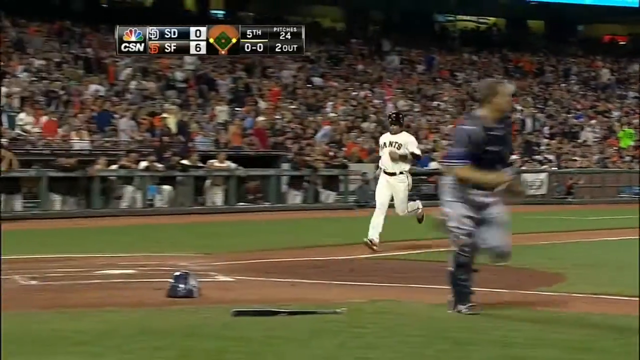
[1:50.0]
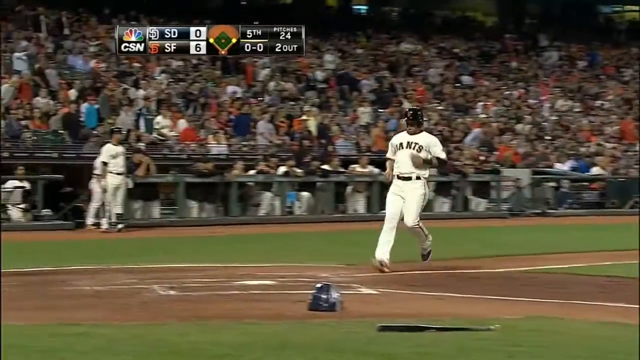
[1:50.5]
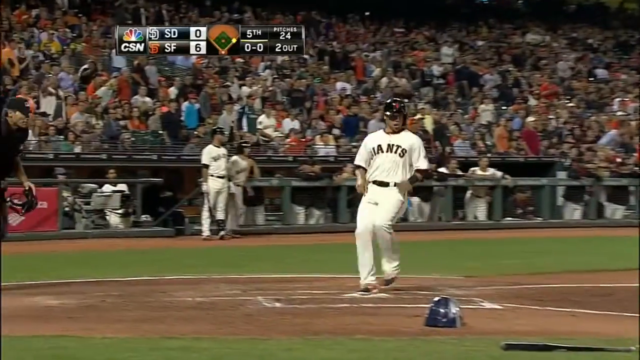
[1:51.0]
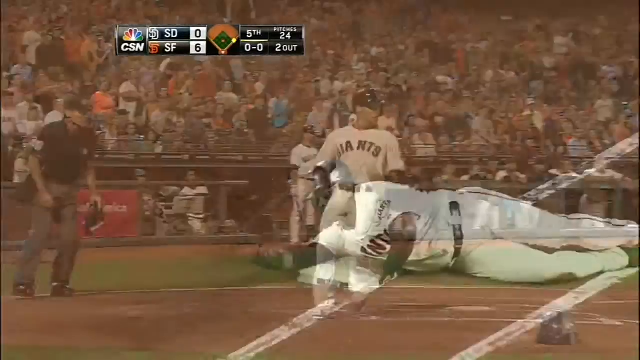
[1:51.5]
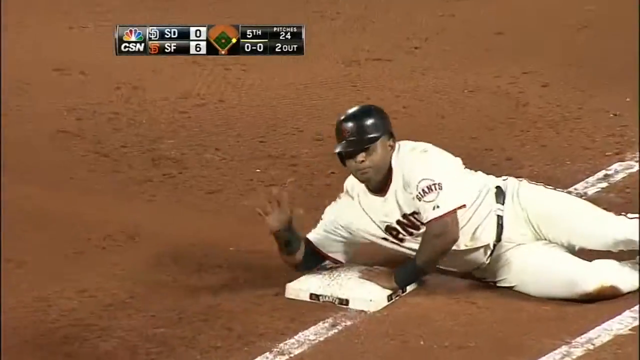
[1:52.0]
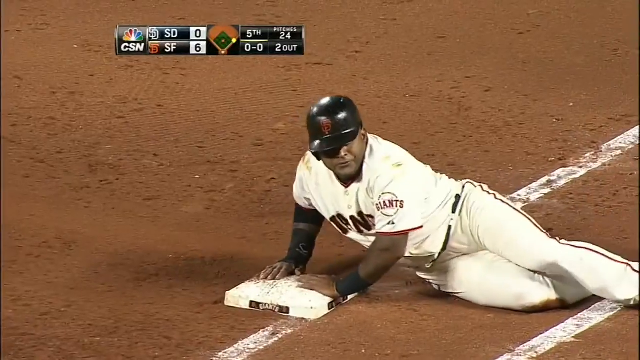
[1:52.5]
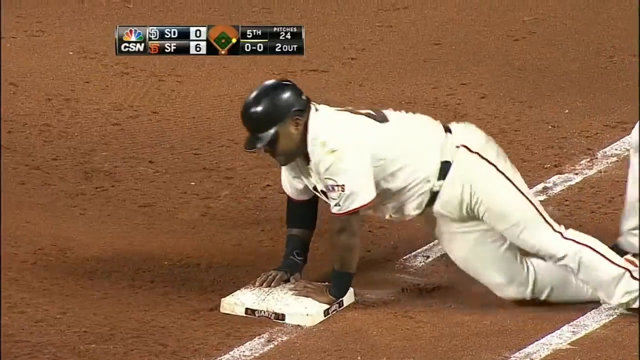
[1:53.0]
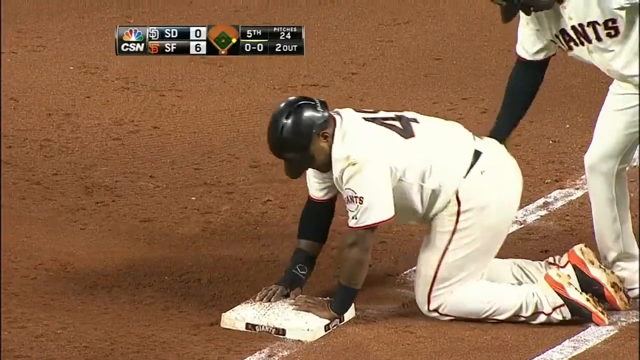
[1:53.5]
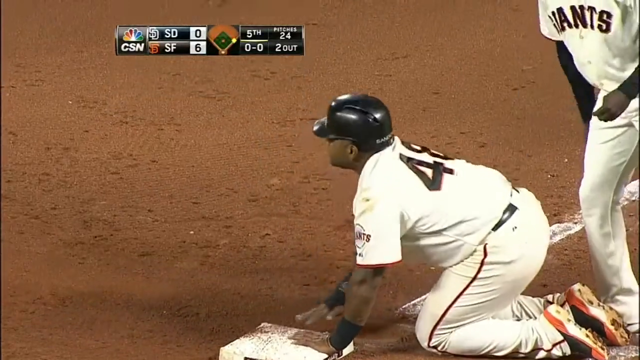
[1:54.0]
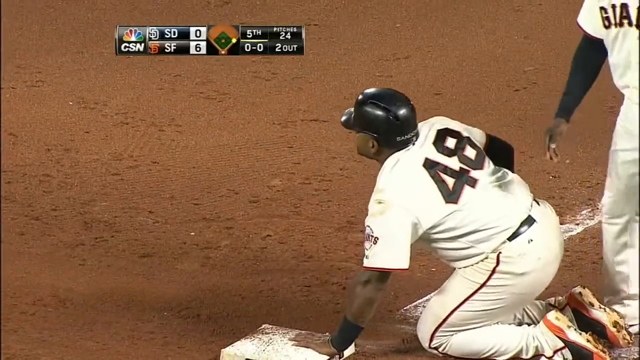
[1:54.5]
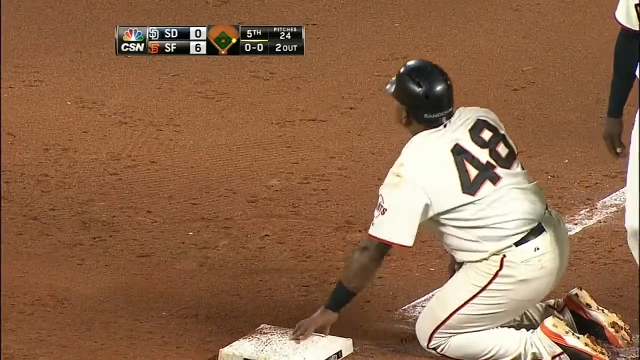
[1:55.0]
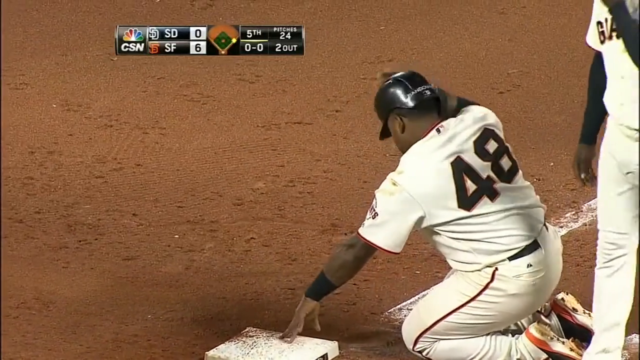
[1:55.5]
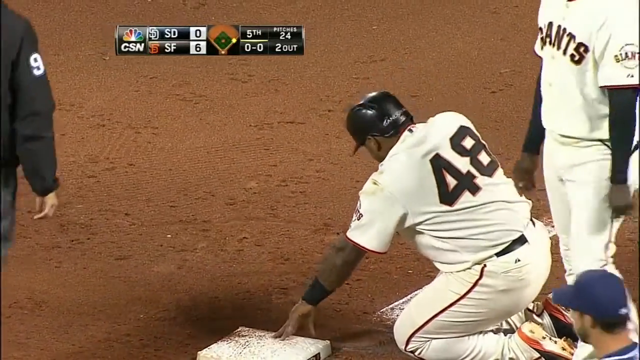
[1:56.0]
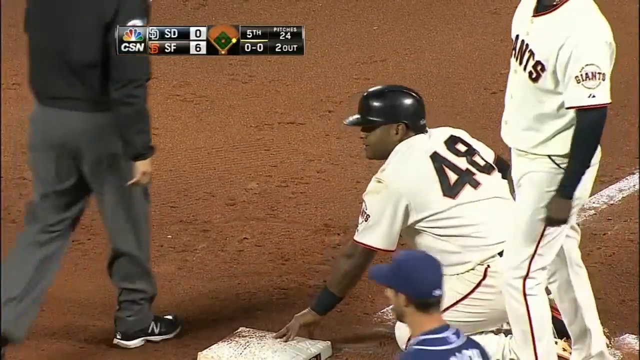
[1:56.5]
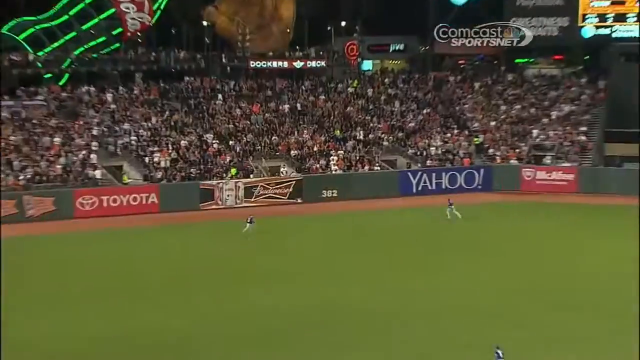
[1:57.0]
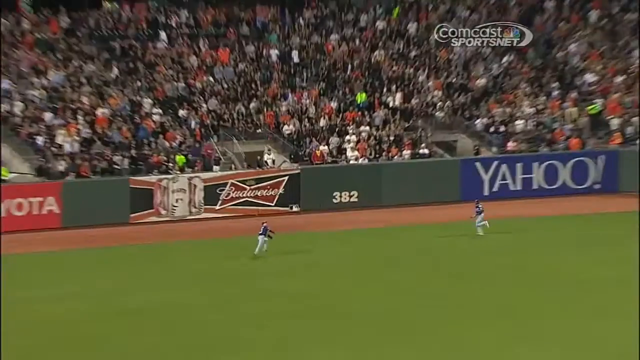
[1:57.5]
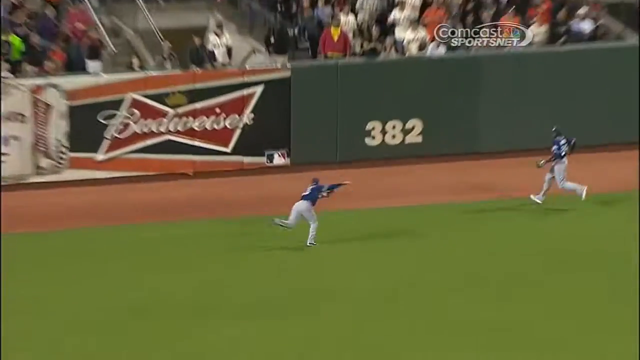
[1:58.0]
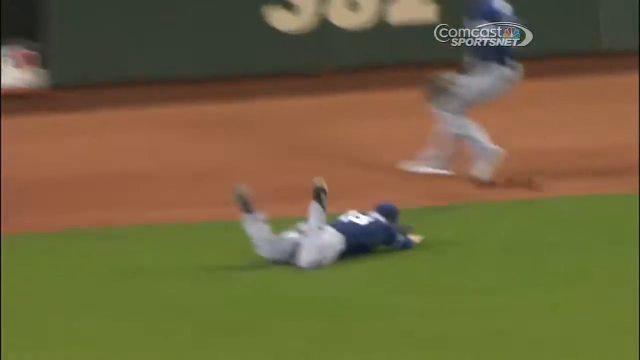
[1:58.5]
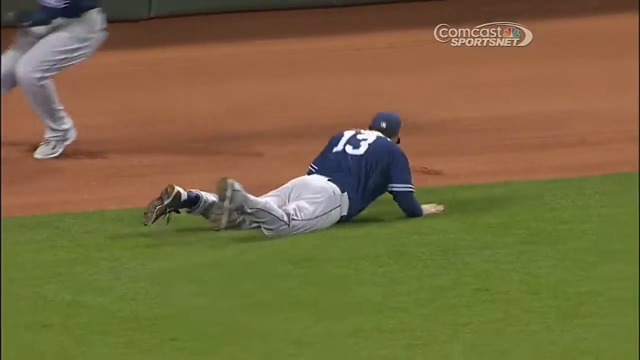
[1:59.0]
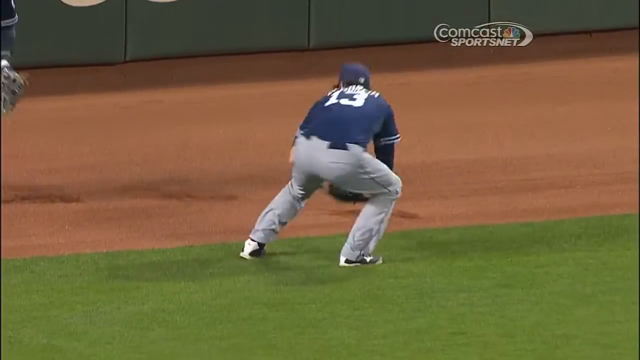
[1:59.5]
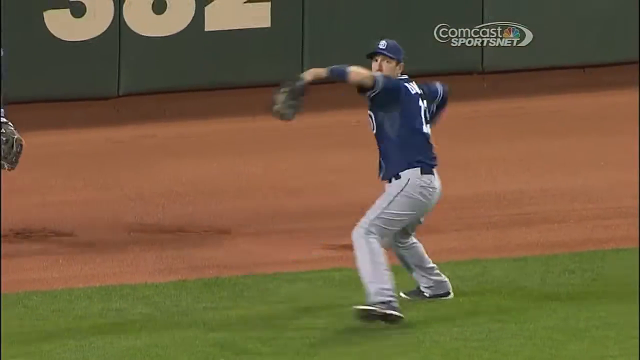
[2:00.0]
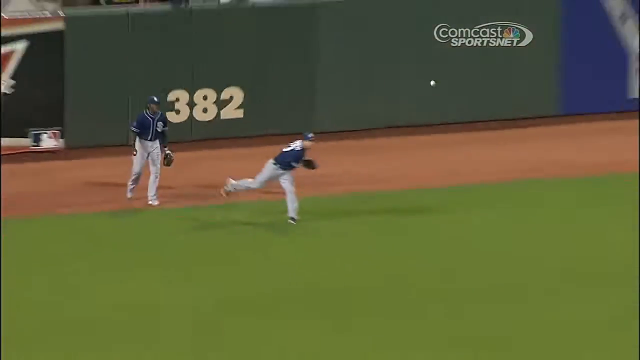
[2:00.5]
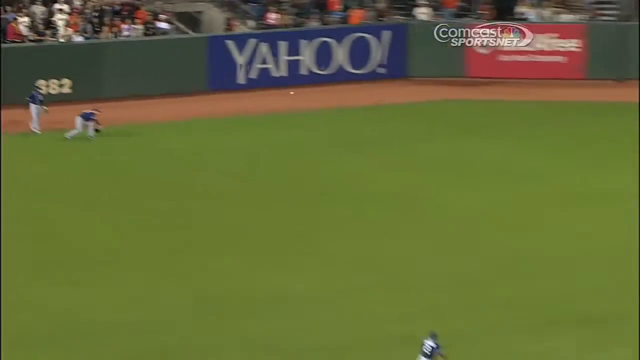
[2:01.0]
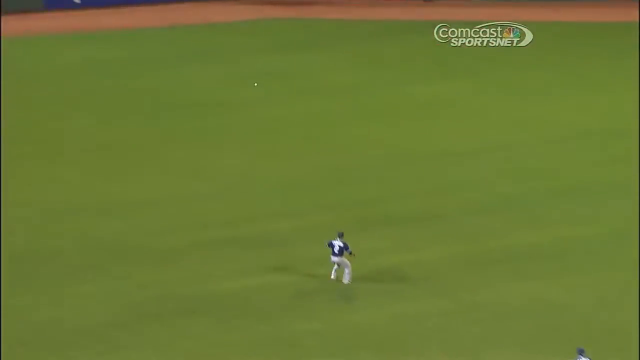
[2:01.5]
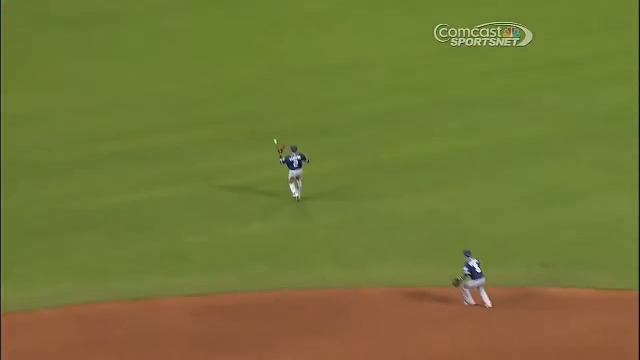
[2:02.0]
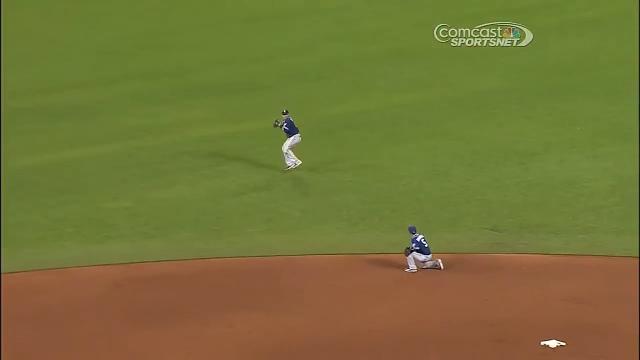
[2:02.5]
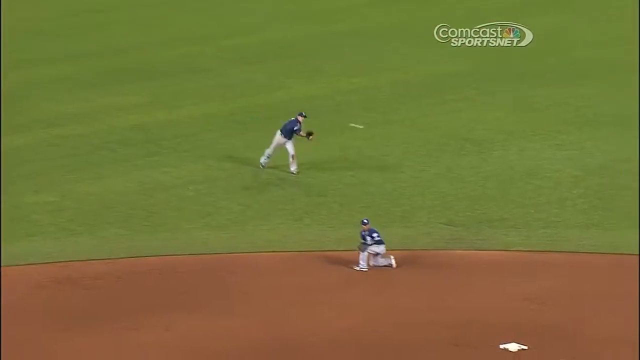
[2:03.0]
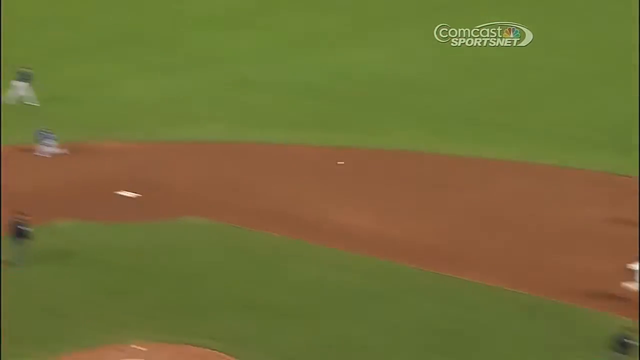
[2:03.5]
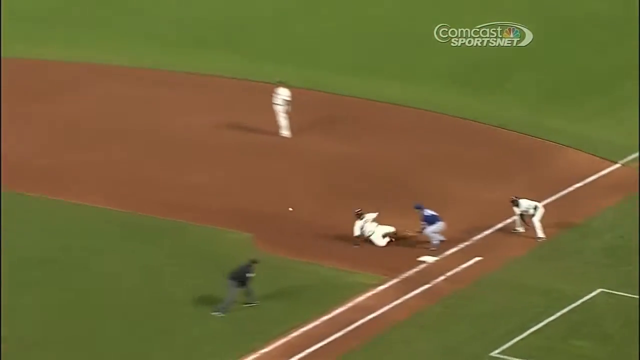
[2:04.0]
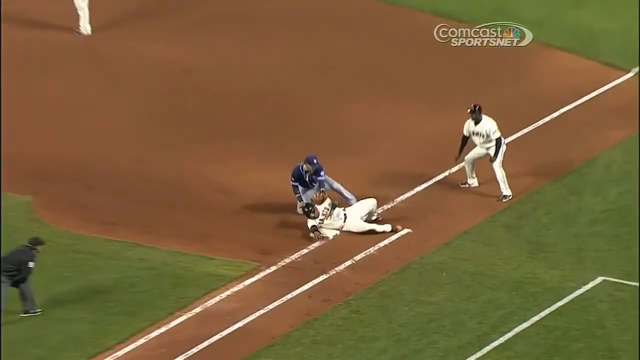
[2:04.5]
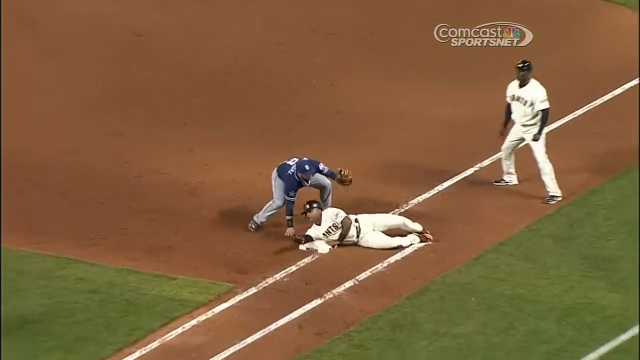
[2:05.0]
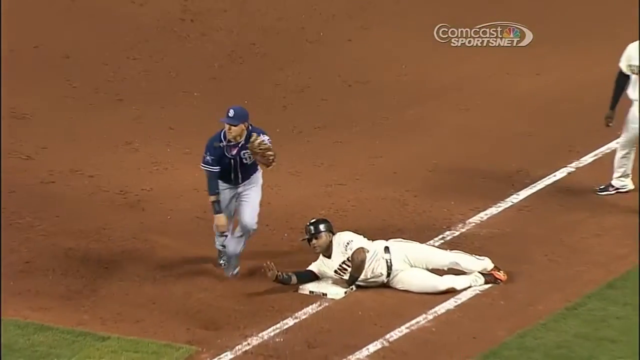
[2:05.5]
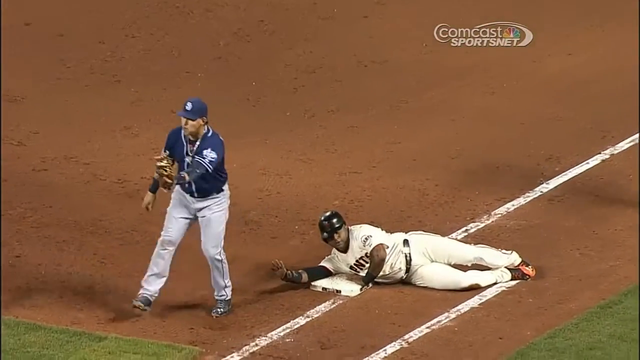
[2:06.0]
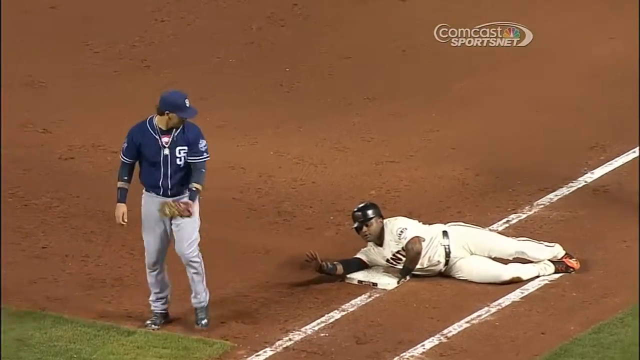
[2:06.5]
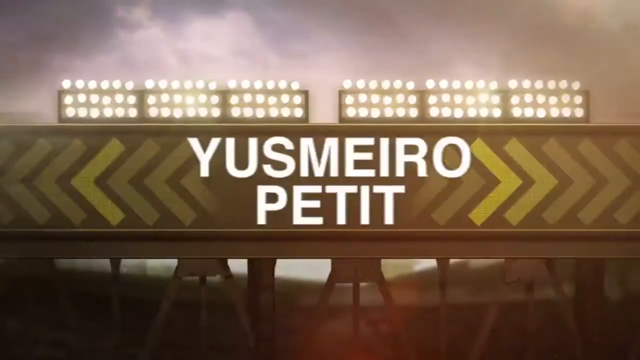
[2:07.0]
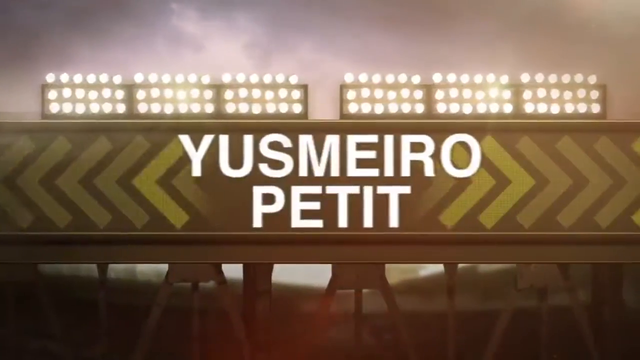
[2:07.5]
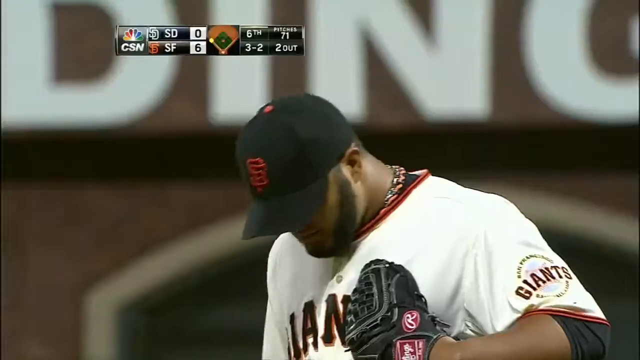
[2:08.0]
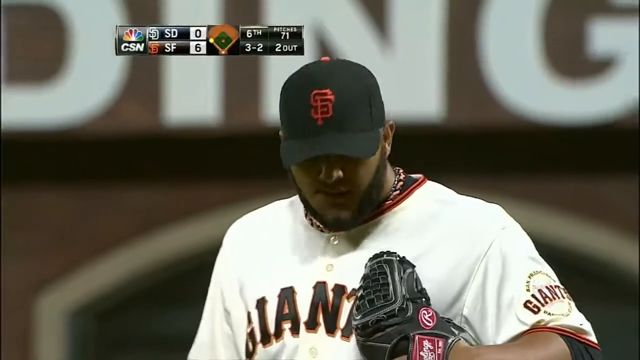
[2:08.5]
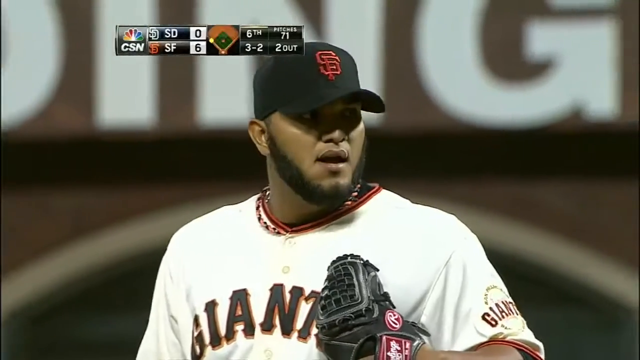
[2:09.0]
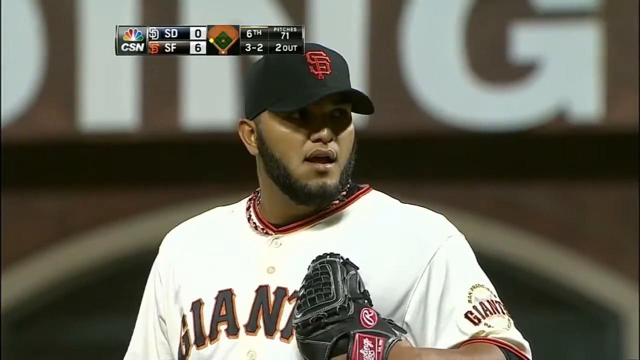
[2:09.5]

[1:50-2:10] In the bottom of the fifth inning of the game between the visiting San Diego Padres and the home San Francisco Giants, there are men on first and third with two outs, and the score is San Diego 0, San Francisco 6. A hit has just been made, and number 48 is safe. In the top of the sixth, with San Francisco leading 6-0 and two outs, a right-handed pitcher works a full count of three balls and two strikes and strikes the batter out.